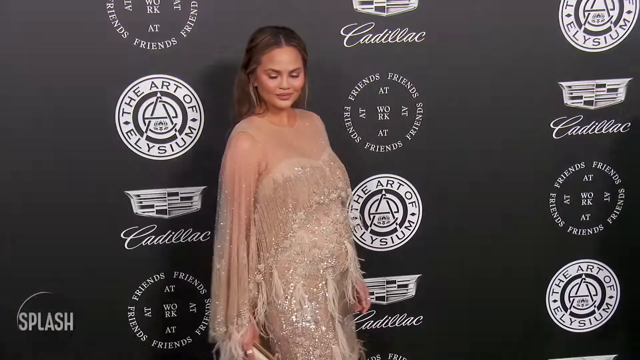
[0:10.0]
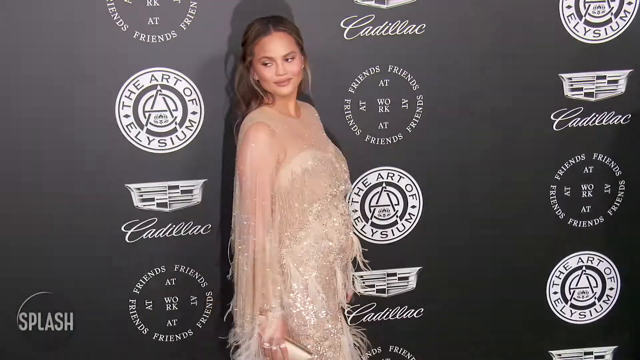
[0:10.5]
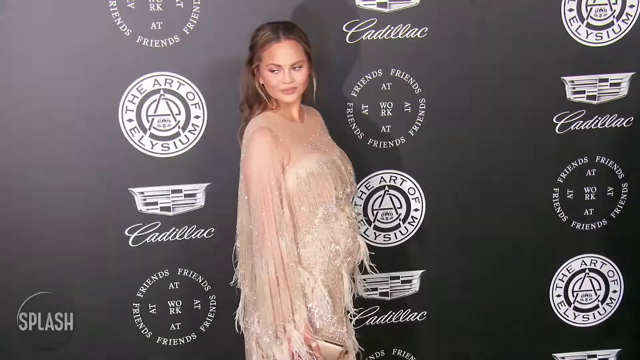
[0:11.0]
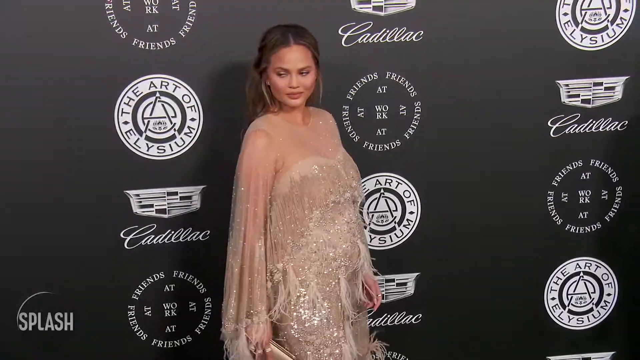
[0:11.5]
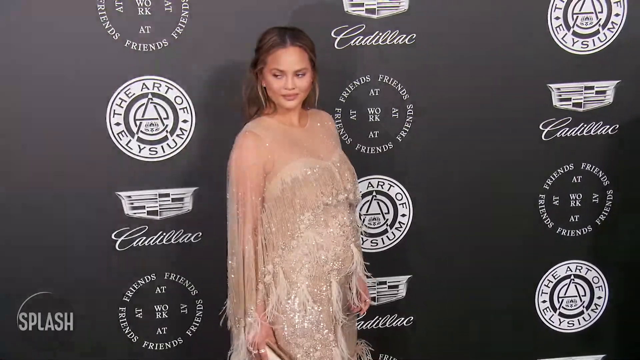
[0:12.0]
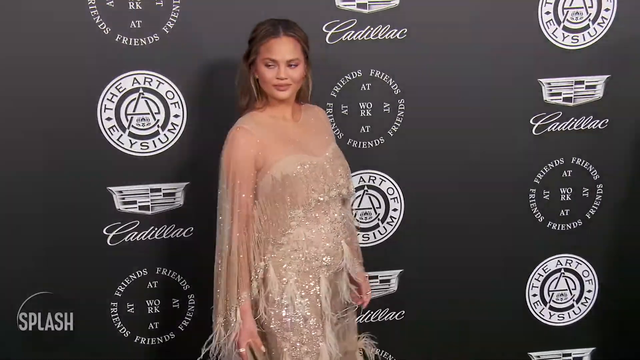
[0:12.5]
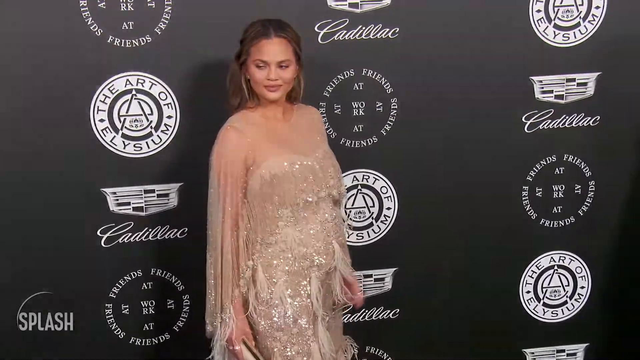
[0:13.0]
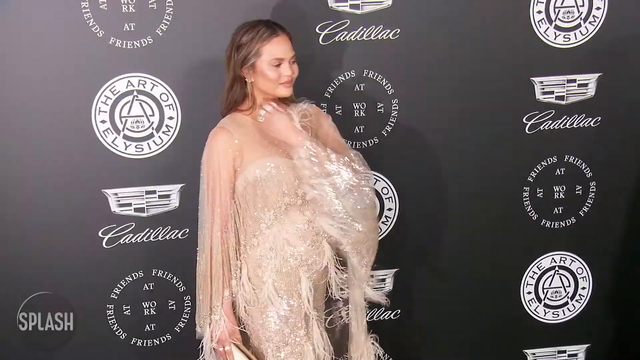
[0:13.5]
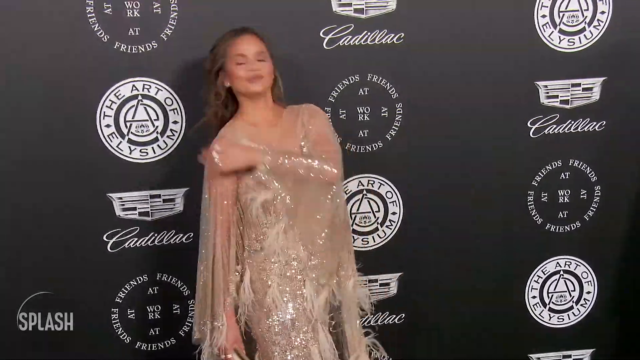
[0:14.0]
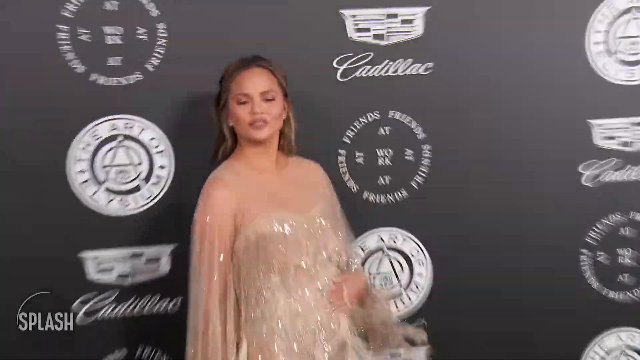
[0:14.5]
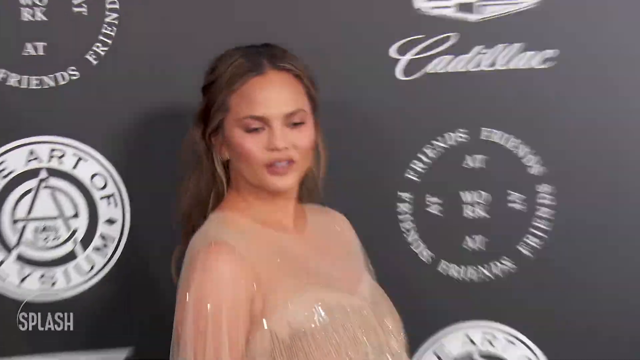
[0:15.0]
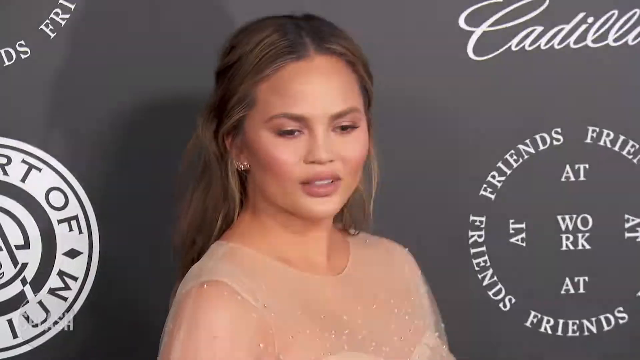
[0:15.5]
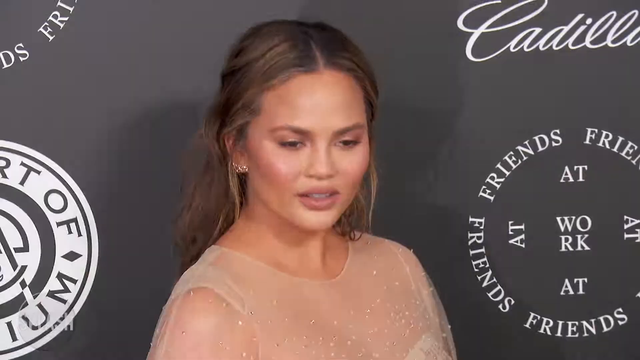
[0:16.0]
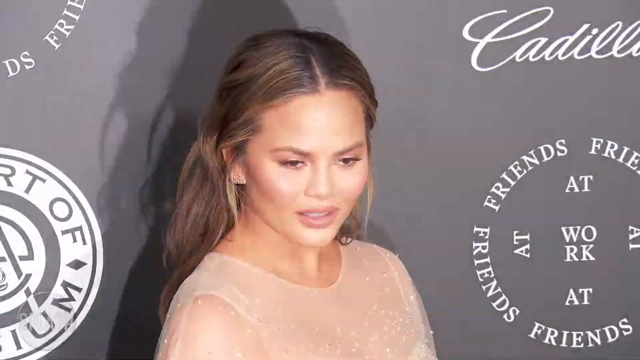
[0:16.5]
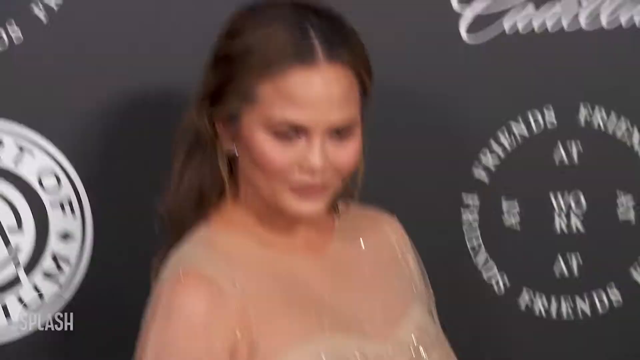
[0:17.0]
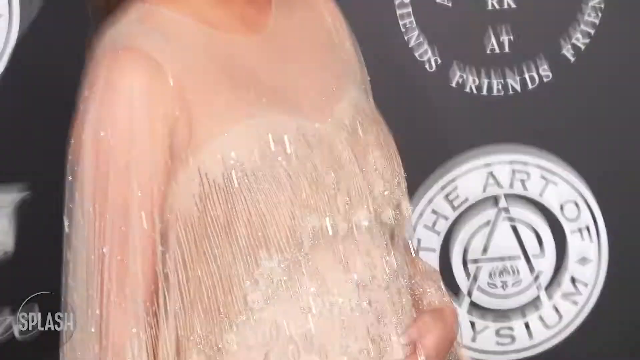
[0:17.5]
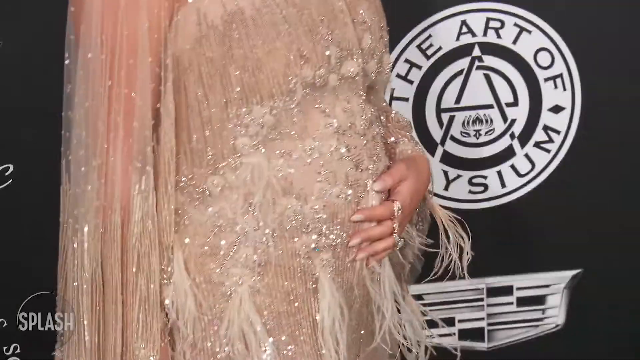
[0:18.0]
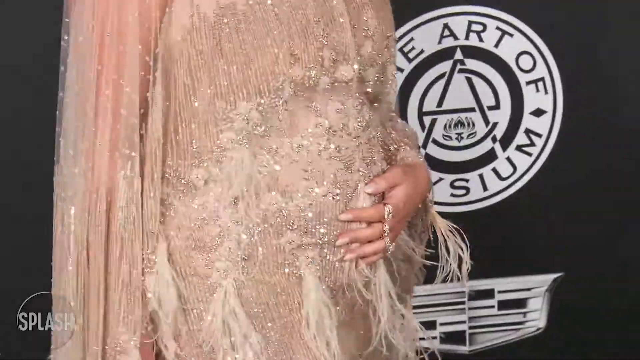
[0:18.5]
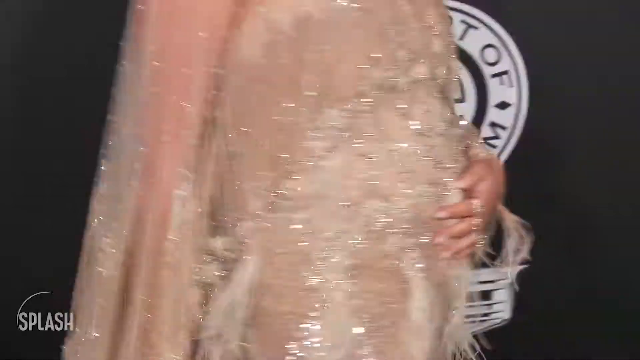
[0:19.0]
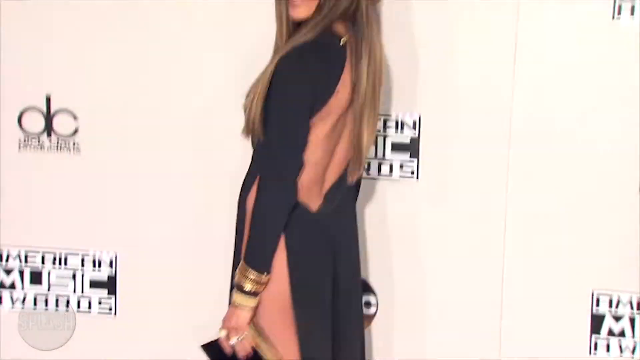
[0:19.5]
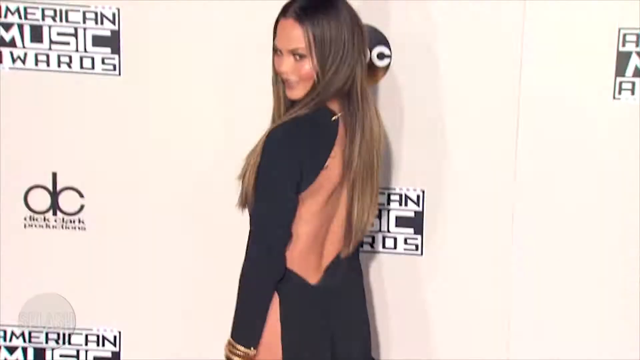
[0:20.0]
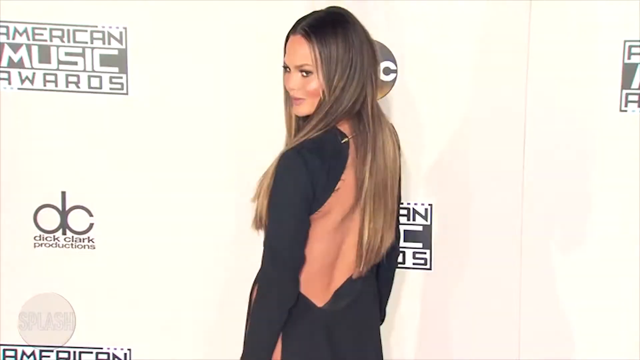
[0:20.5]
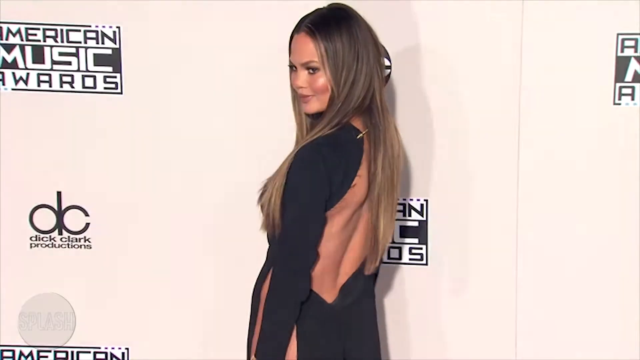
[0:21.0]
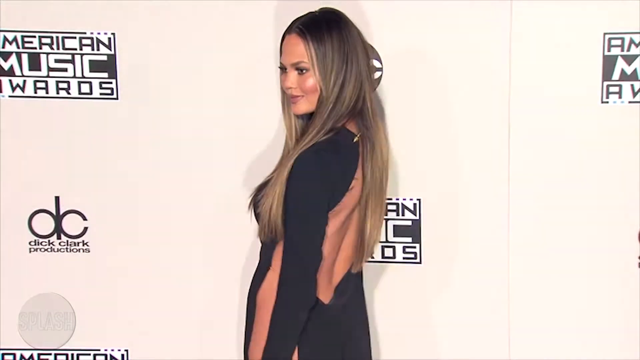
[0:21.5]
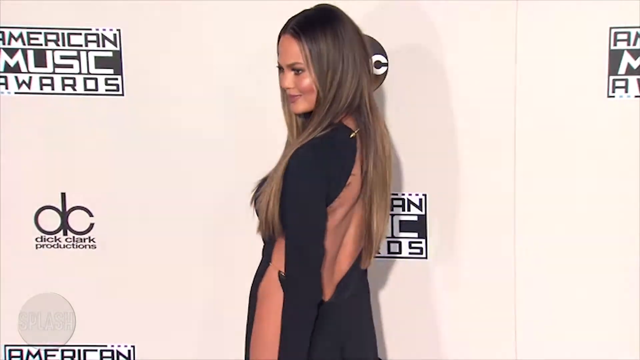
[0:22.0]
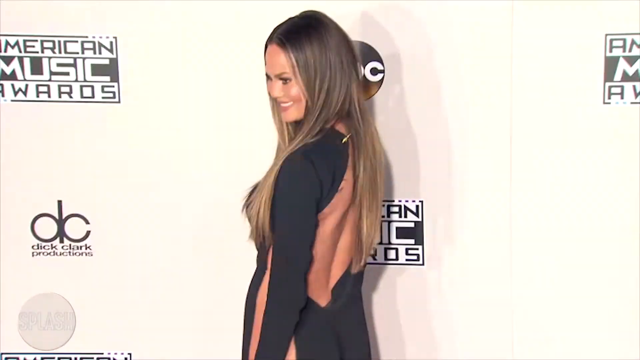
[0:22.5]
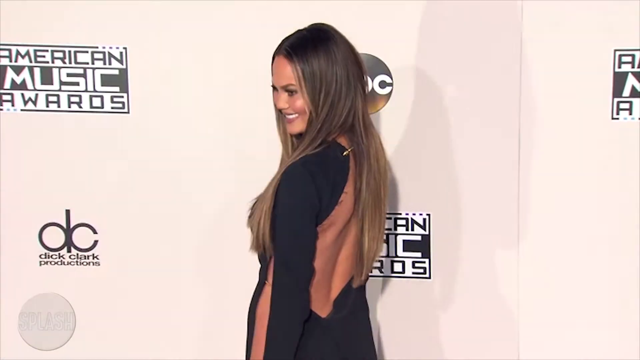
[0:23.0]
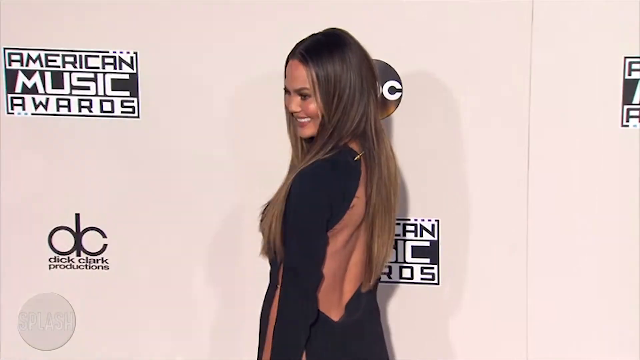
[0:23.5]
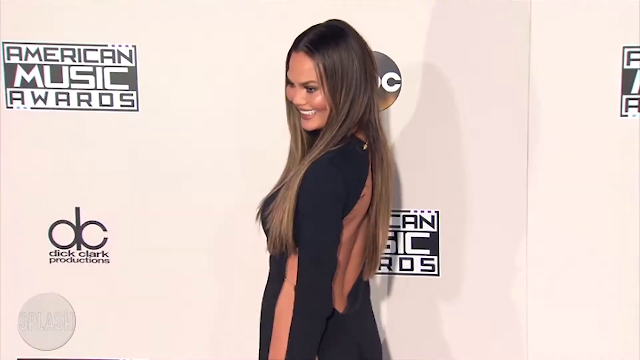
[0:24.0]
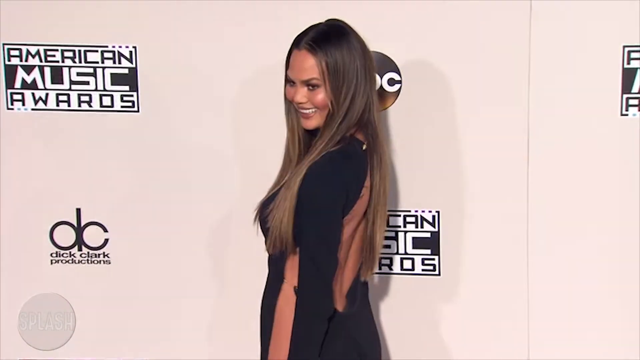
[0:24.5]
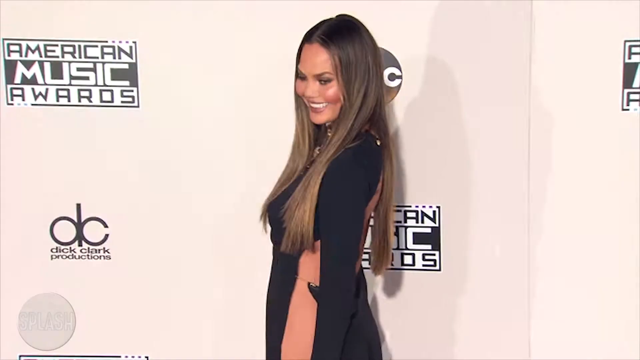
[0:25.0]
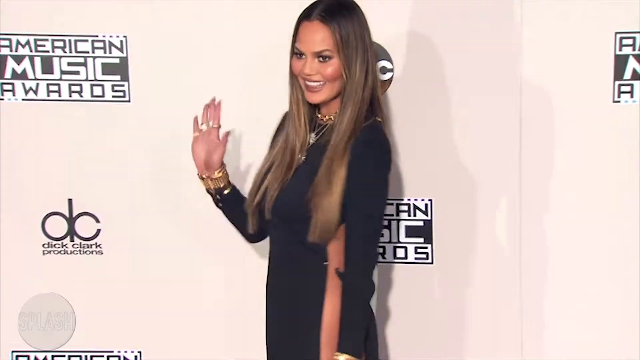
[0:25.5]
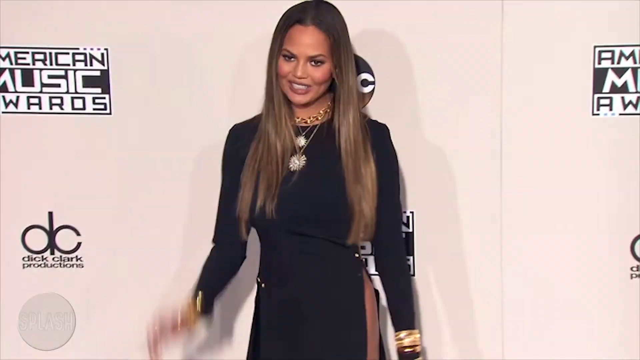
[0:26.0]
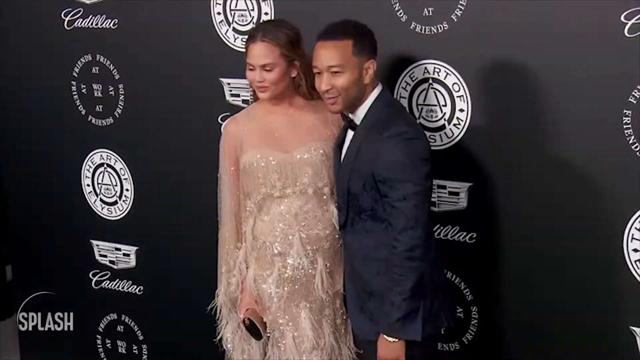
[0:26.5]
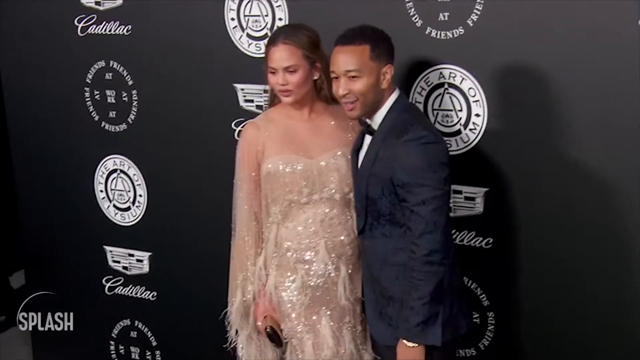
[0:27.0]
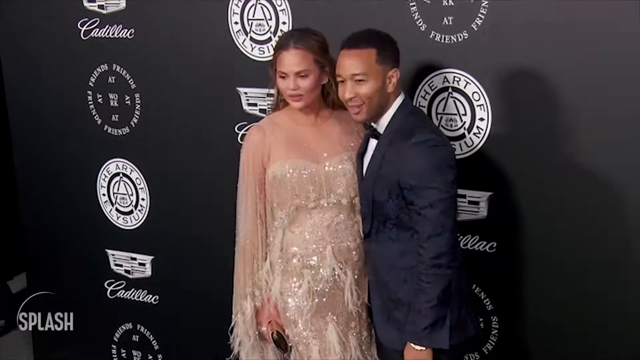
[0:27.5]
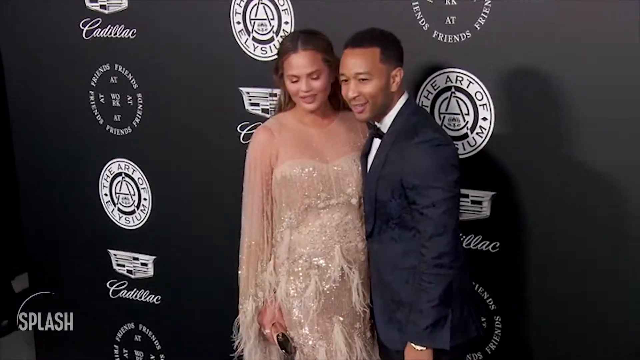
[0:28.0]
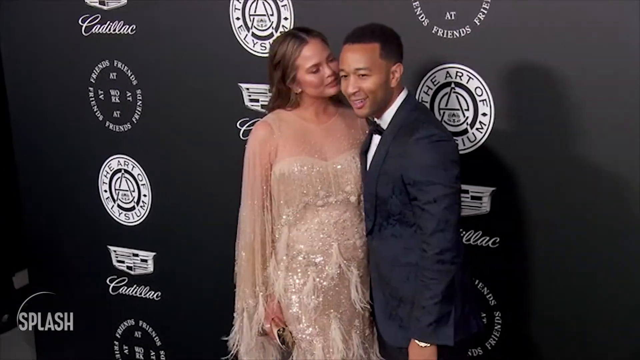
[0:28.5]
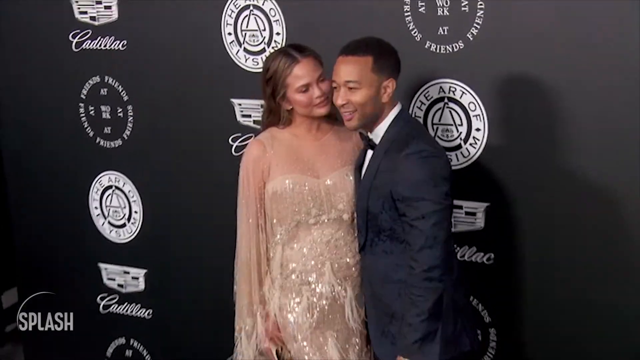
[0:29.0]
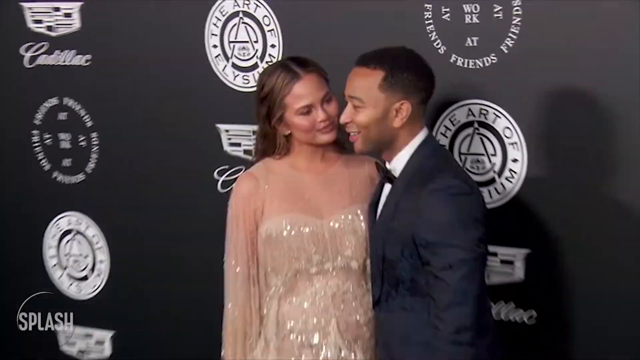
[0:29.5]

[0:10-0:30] Chrissy is in her white and gold dress, which is mainly gold, in front of the Cadillac banner. She puts her hand to her face and smiles a little. She may be pregnant, though it is hard to tell. The video then flashes to a picture of a model in a black dress with very long hair, standing in front of a banner that says "American Music Awards"; it is unclear whether this is Chrissy or someone else, though it is probably her at a different time. The video comes back to a picture of John Legend and Chrissy Teigen at the Oscars again, him in his tuxedo and her in her dress, seemingly as a then-versus-now comparison.